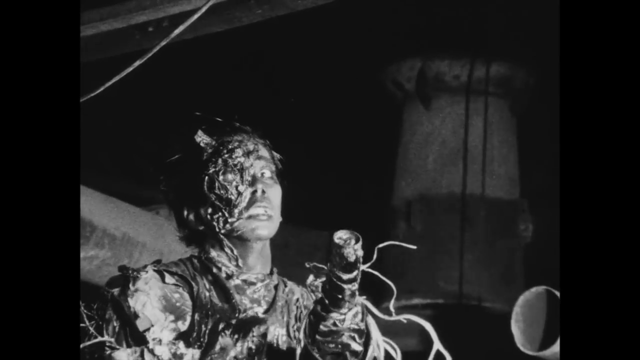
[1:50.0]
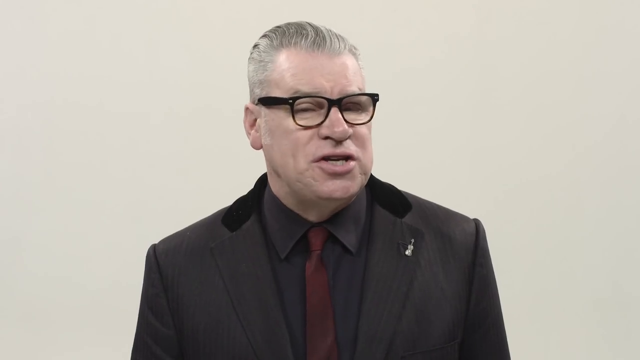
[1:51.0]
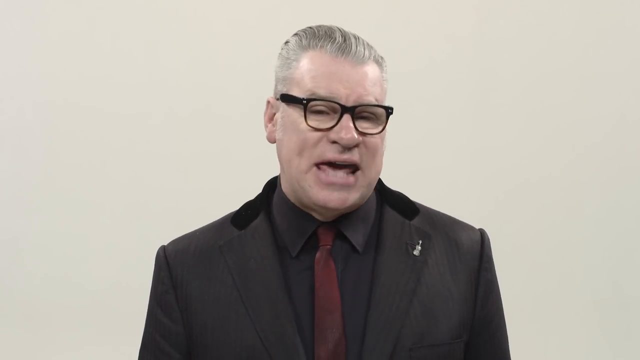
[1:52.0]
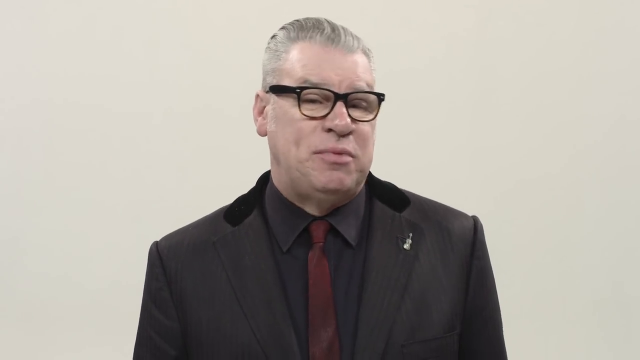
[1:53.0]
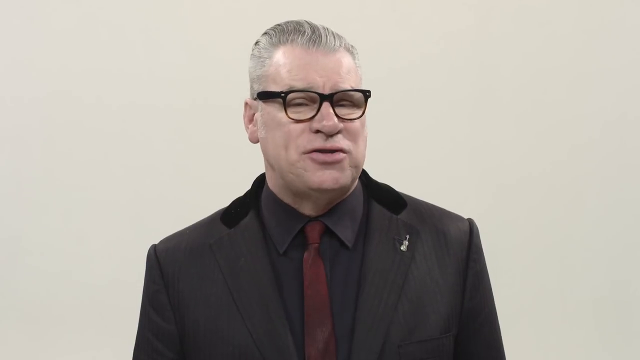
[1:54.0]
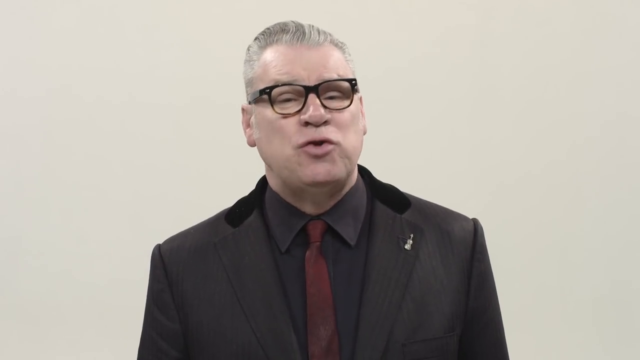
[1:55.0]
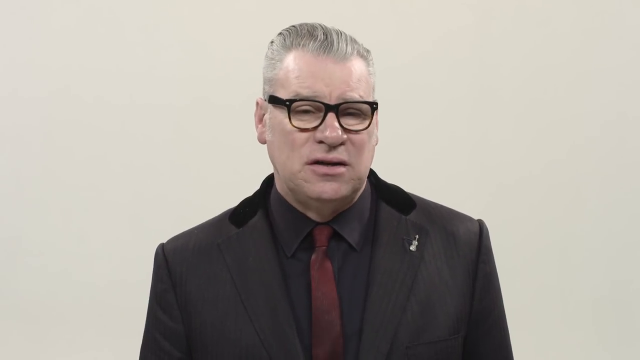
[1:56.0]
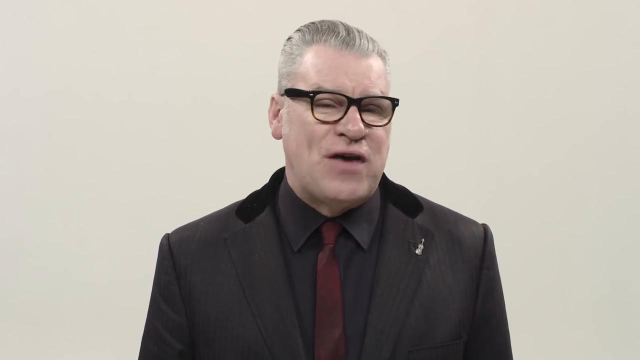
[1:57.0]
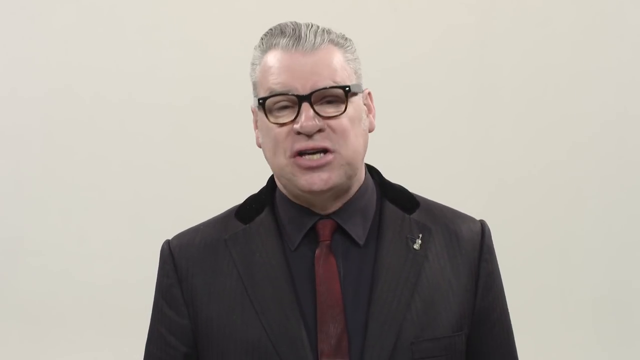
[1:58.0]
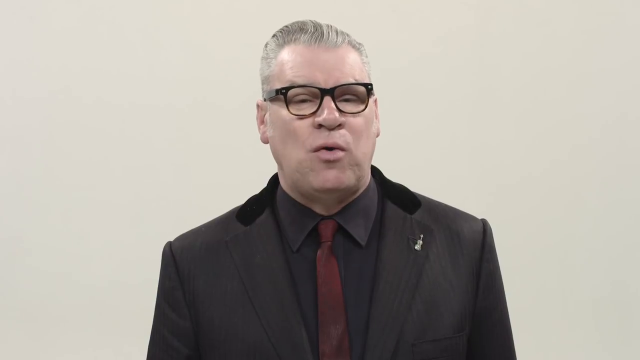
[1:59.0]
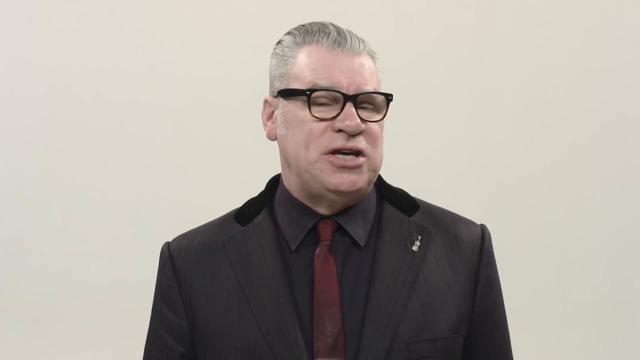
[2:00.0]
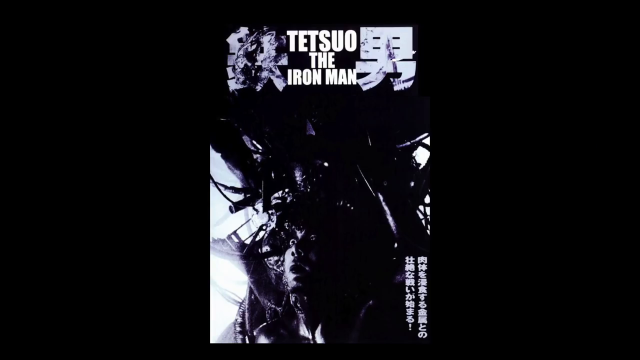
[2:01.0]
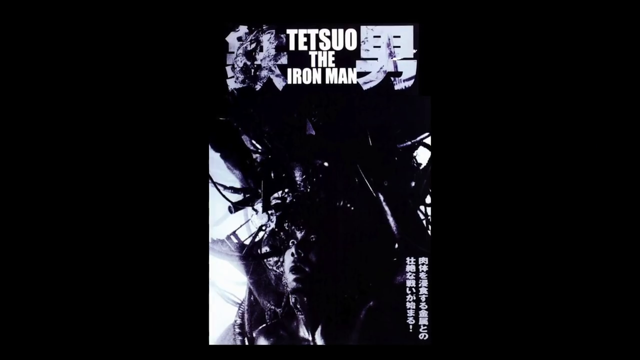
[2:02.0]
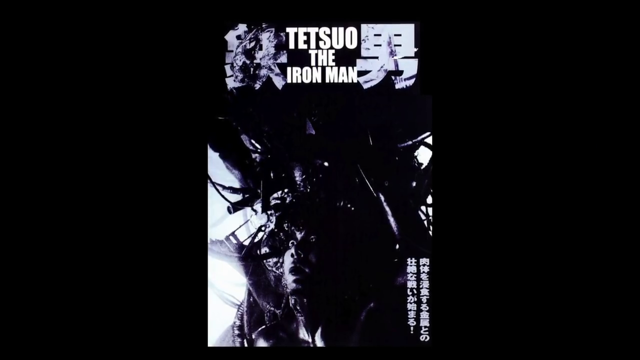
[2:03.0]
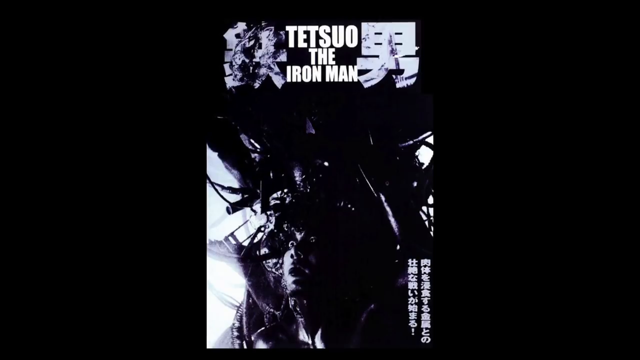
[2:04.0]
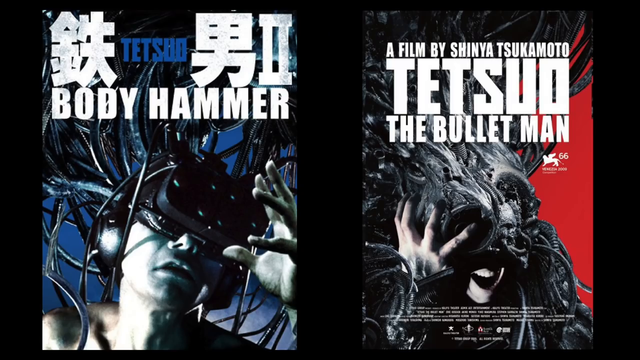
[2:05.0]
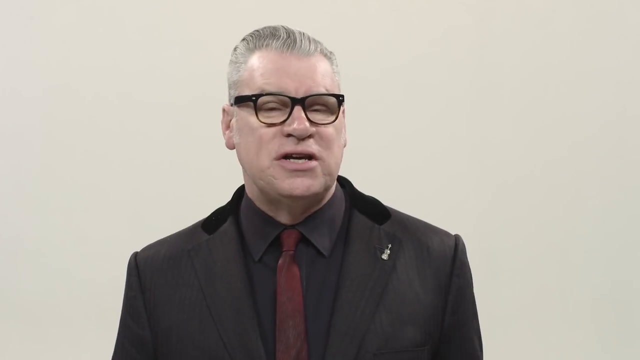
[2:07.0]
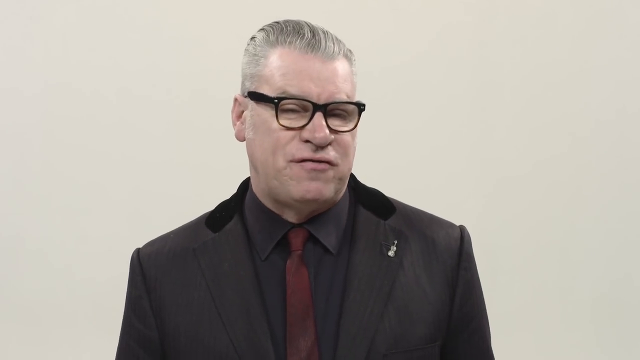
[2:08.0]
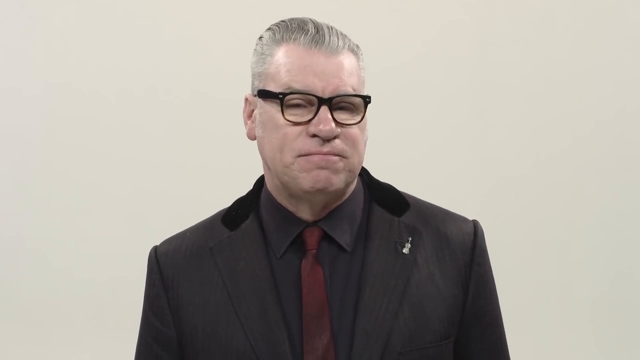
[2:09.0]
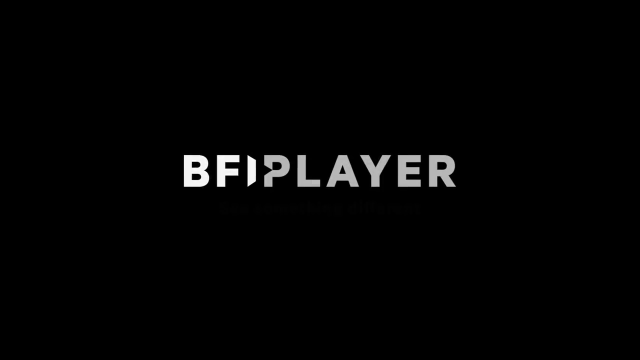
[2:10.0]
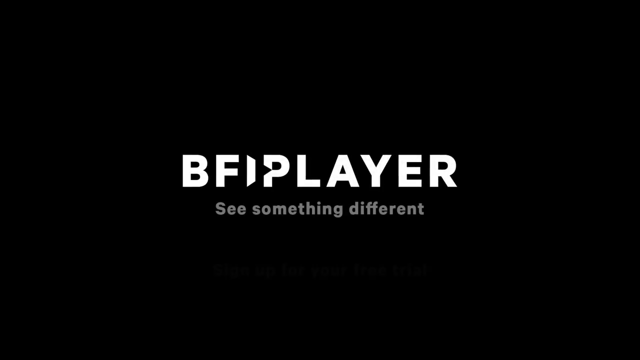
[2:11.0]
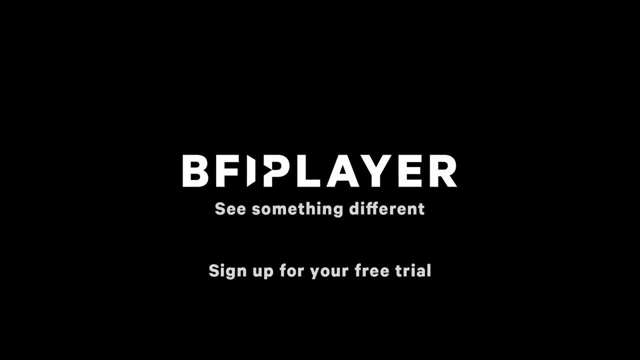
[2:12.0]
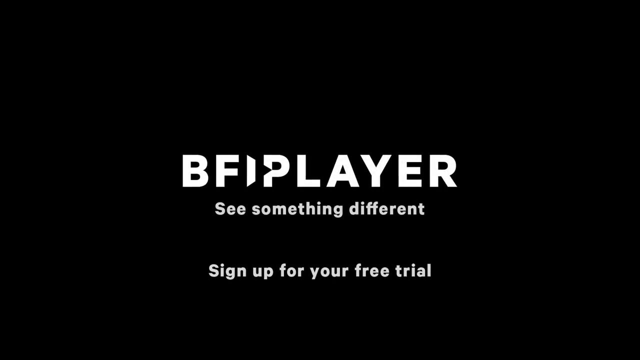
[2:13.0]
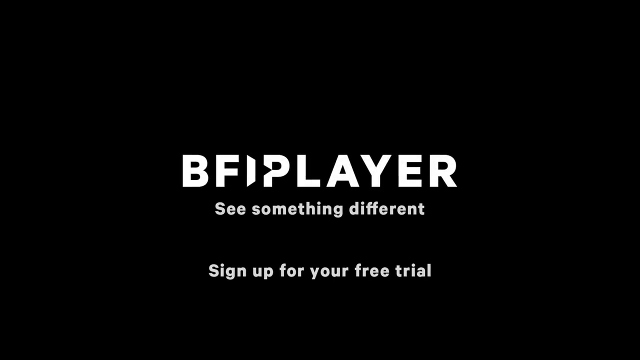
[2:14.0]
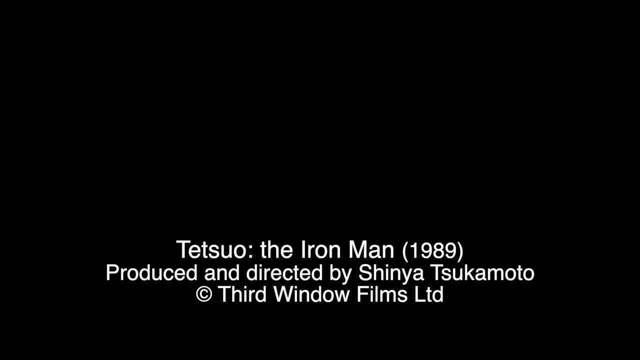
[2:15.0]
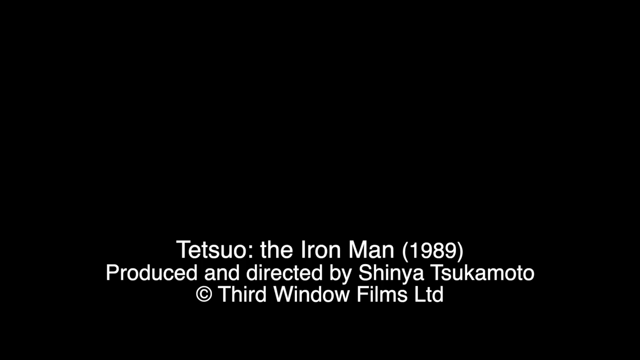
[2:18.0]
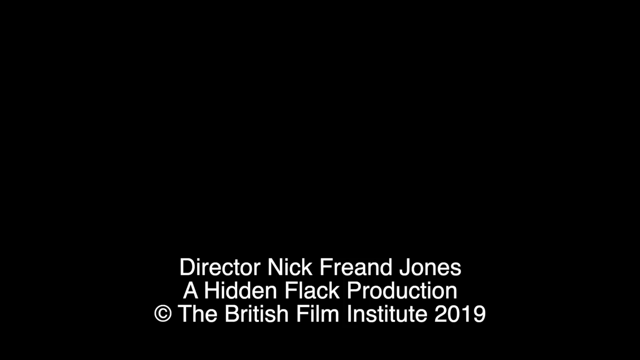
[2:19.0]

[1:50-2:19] The man in the glasses and suit speaks with his head still turned slightly to the left, nodding ever so slightly. His head is turned just enough that his right ear is visible but not his left, and the frames of his glasses show on the right. He has two small patches of darker black material on his shoulders, coming down from the collar of his jacket. A poster for the movie follows, reading "Tetsuo, the Iron Man", with a black-and-white still photograph with some purple tones of the man covered in metal, his eyes wide open and his mouth agape. Two other posters for similar movies appear, one called "Body Hammer" and one called "The Bullet Man". Each shows a photo of someone's face covered with cables and wires or metal bits of some sort.